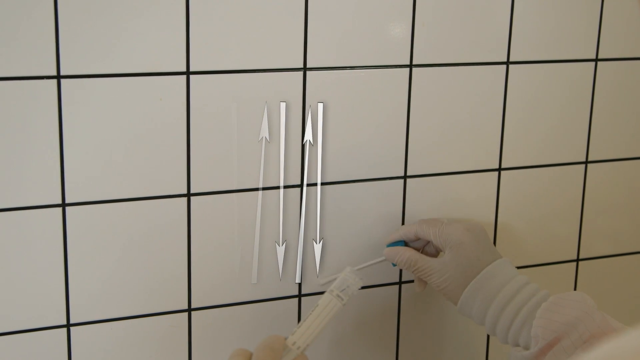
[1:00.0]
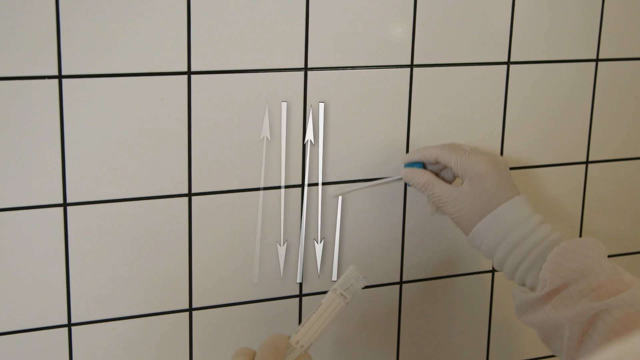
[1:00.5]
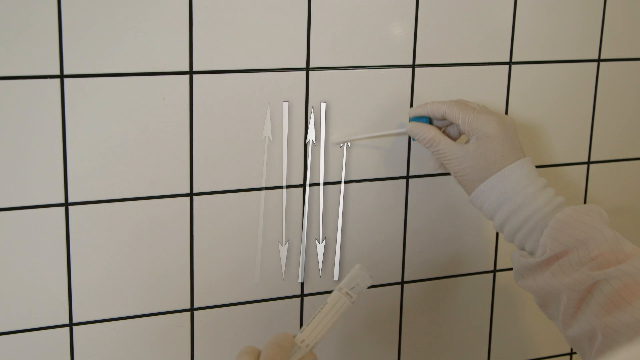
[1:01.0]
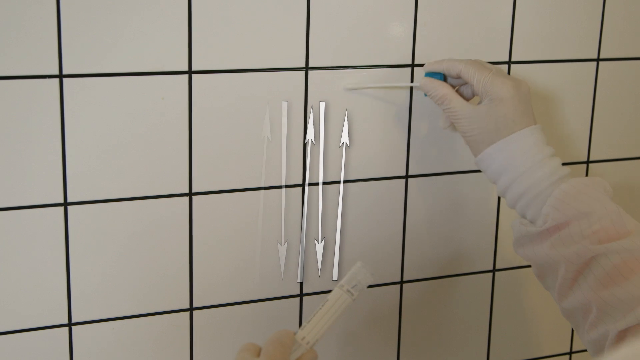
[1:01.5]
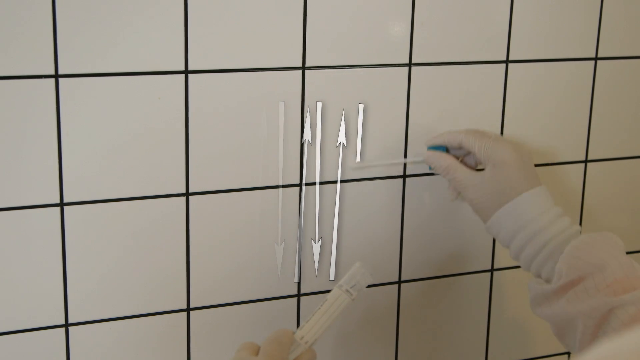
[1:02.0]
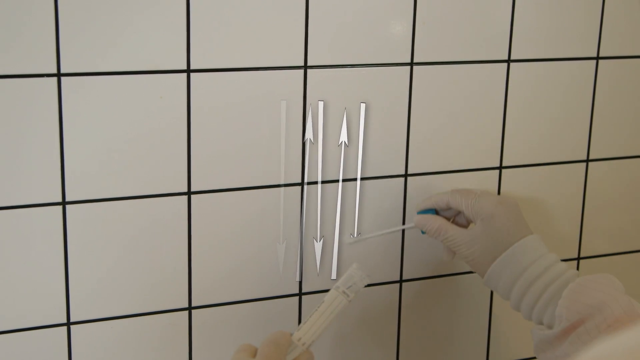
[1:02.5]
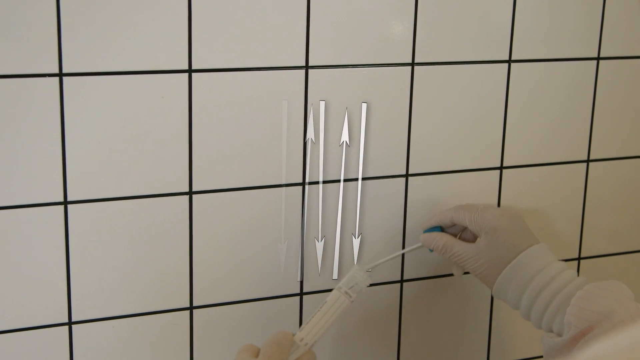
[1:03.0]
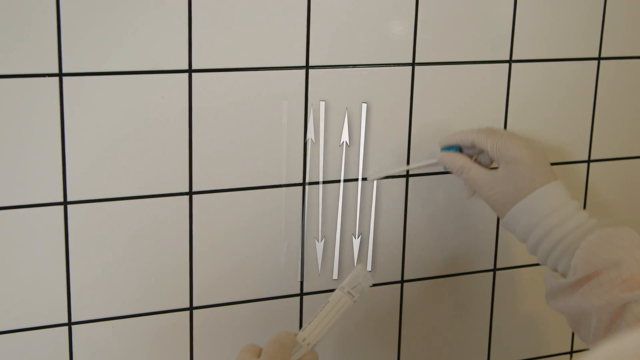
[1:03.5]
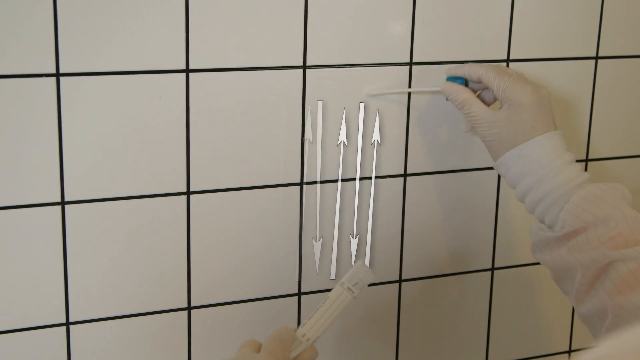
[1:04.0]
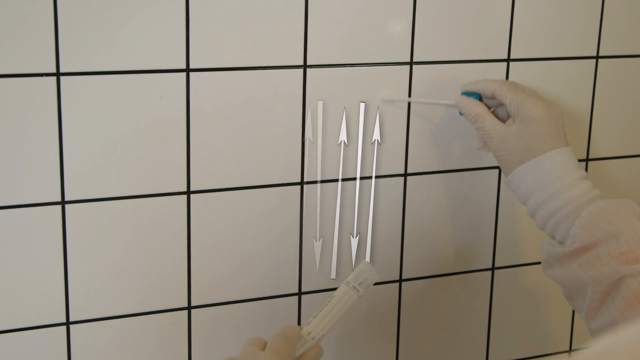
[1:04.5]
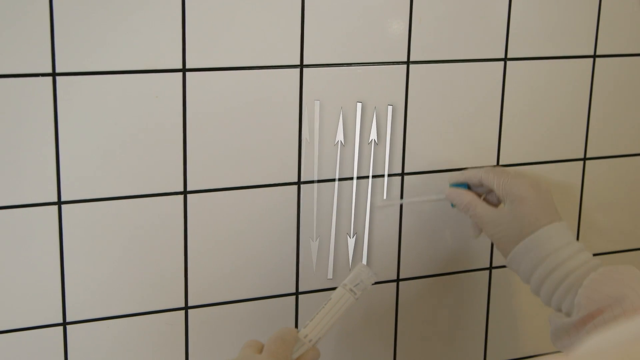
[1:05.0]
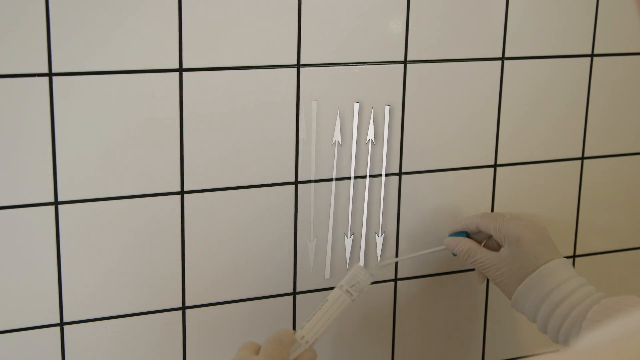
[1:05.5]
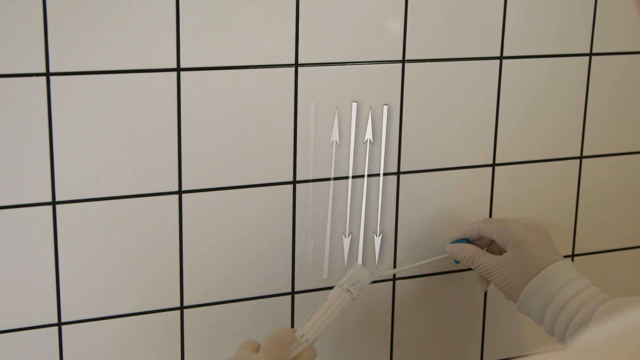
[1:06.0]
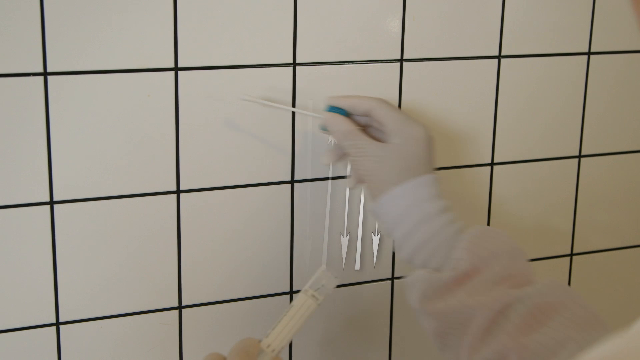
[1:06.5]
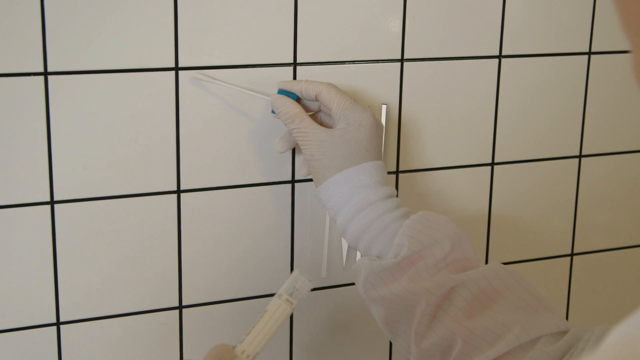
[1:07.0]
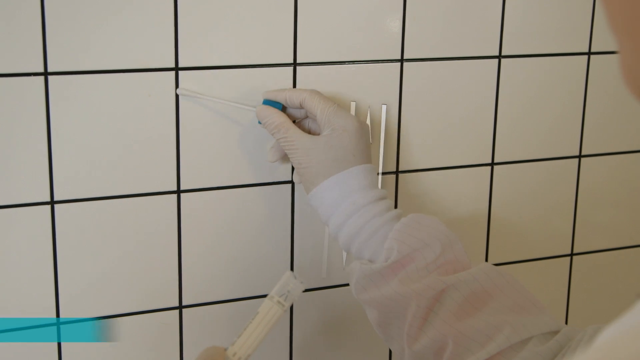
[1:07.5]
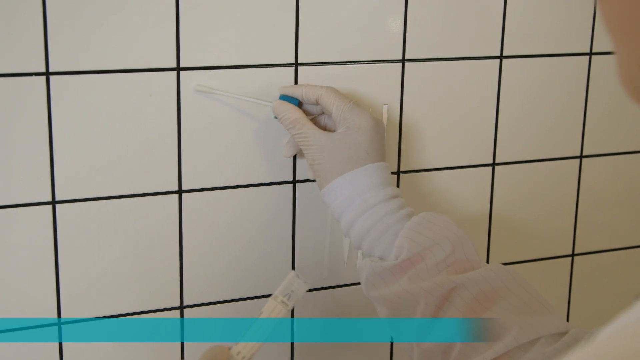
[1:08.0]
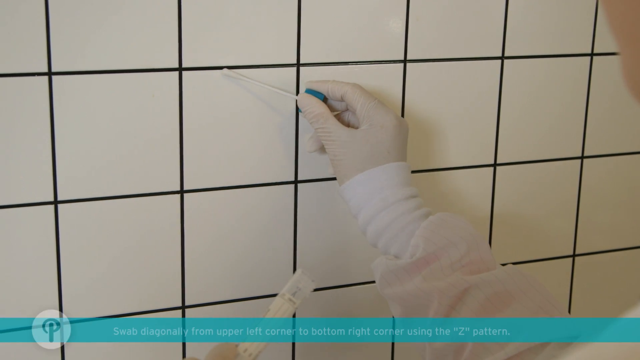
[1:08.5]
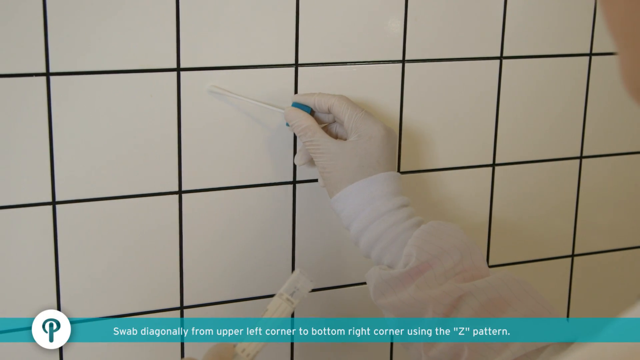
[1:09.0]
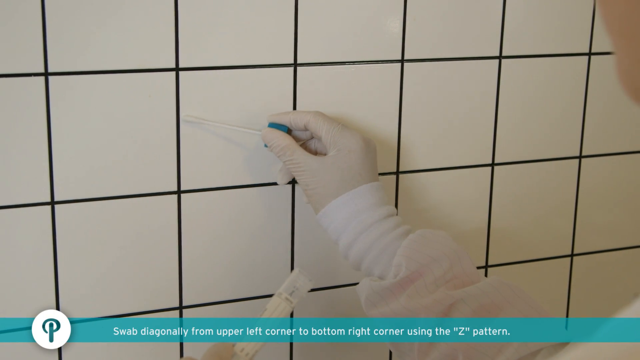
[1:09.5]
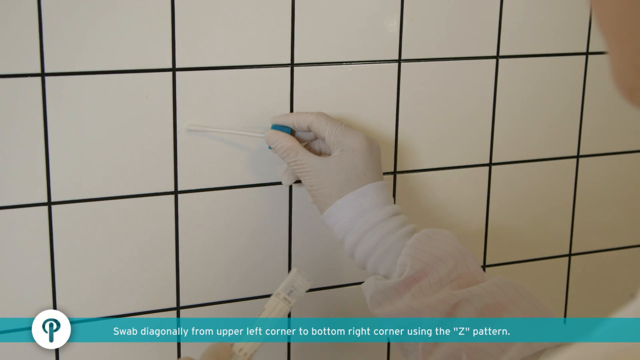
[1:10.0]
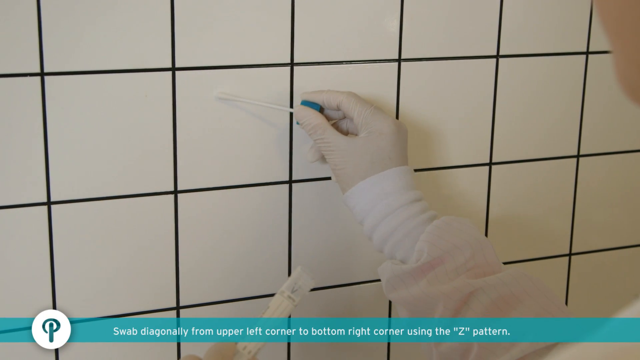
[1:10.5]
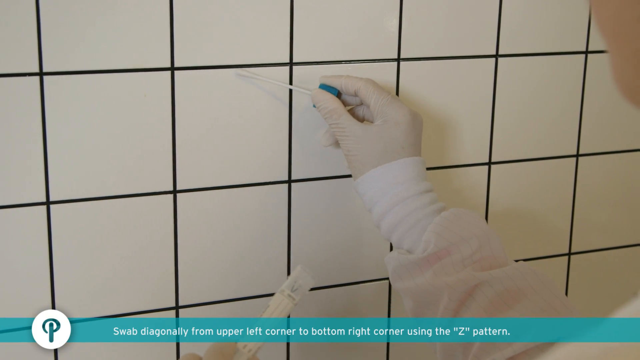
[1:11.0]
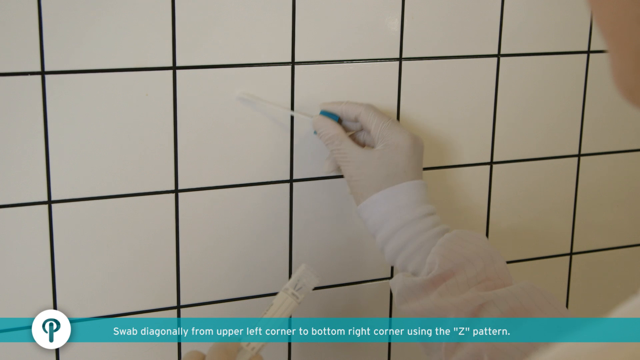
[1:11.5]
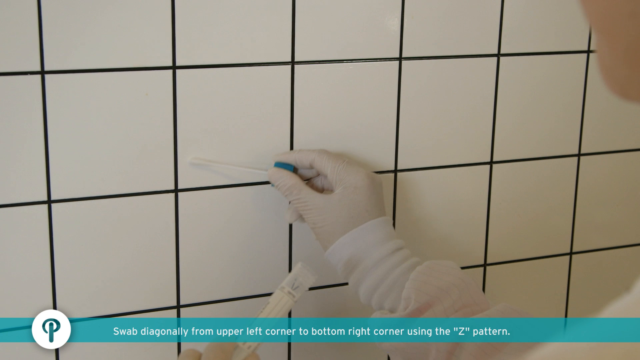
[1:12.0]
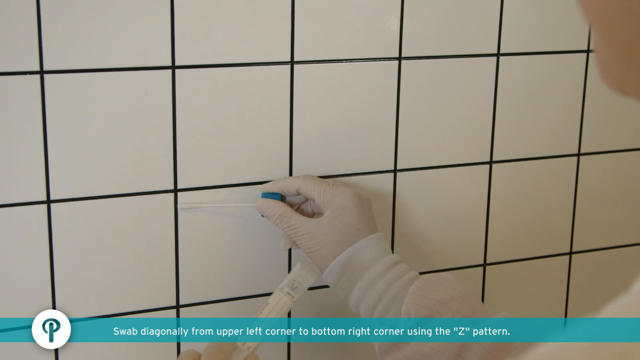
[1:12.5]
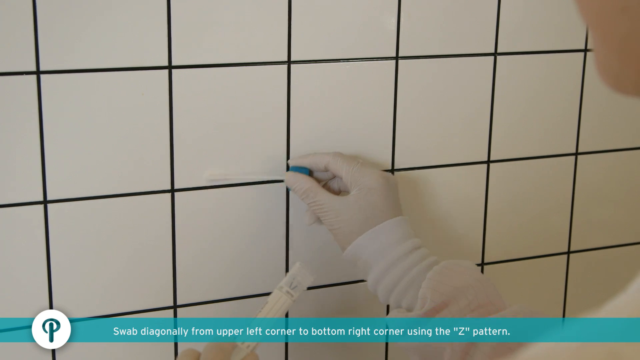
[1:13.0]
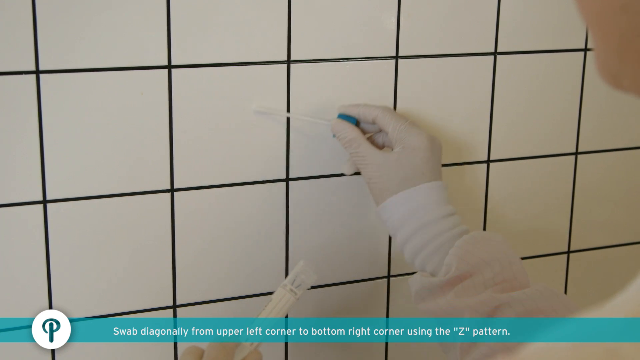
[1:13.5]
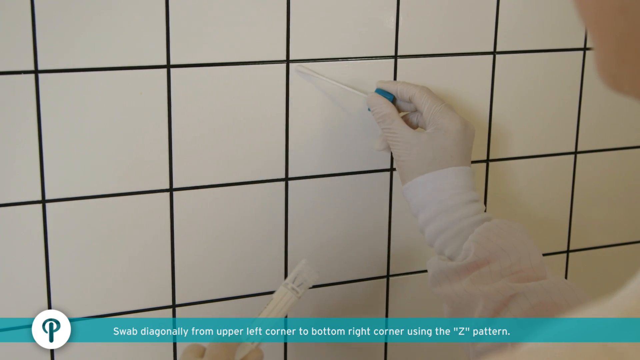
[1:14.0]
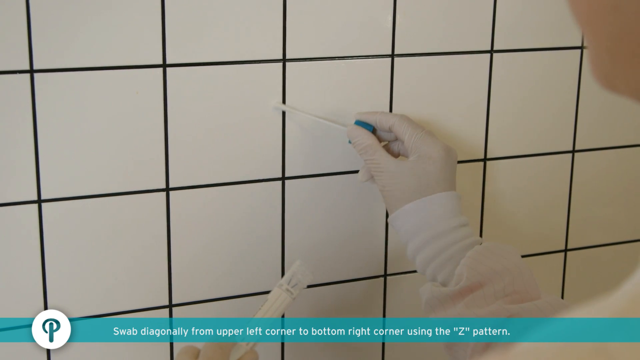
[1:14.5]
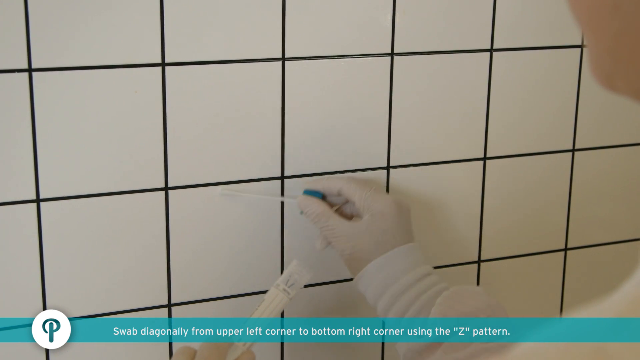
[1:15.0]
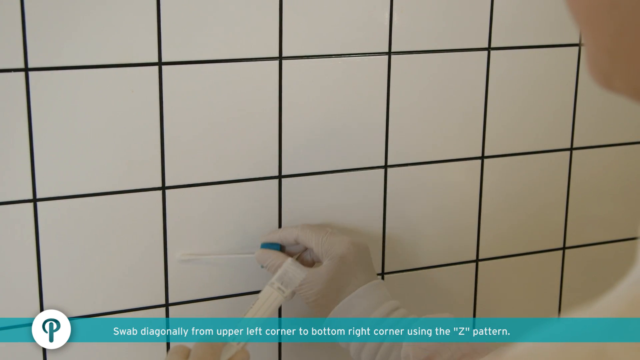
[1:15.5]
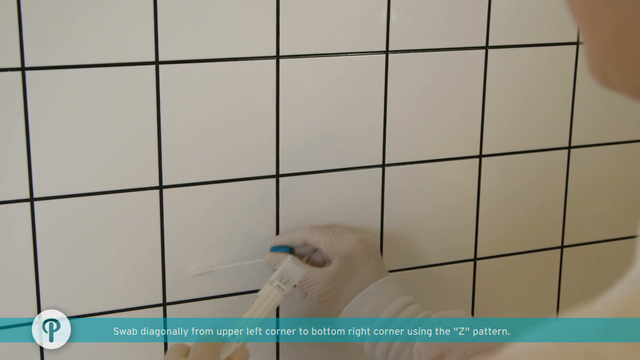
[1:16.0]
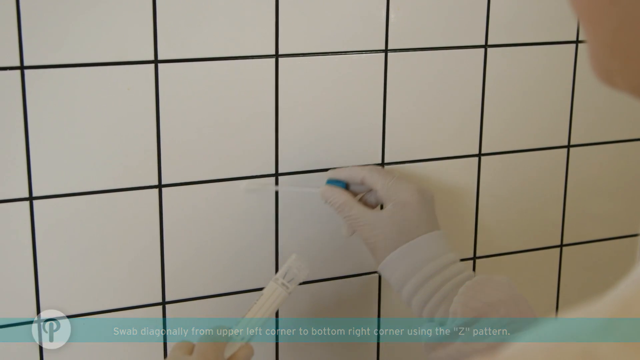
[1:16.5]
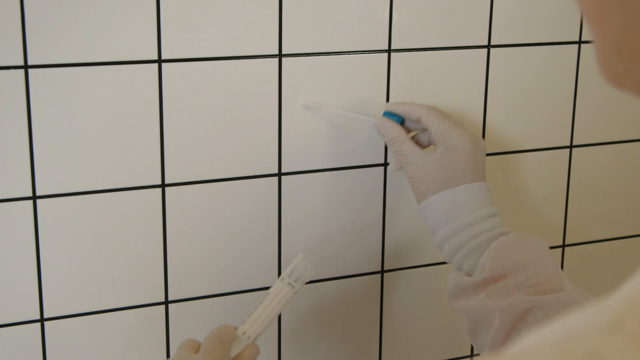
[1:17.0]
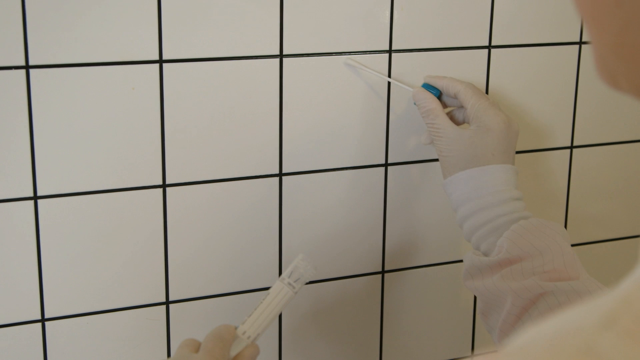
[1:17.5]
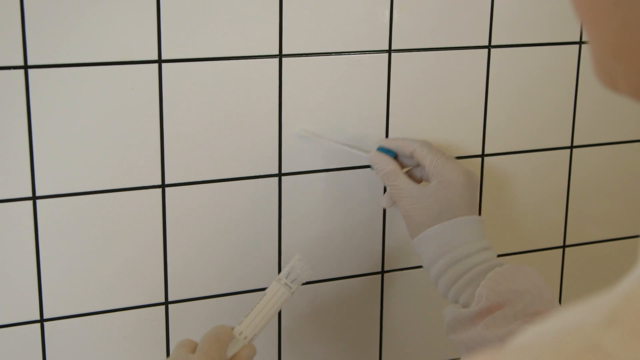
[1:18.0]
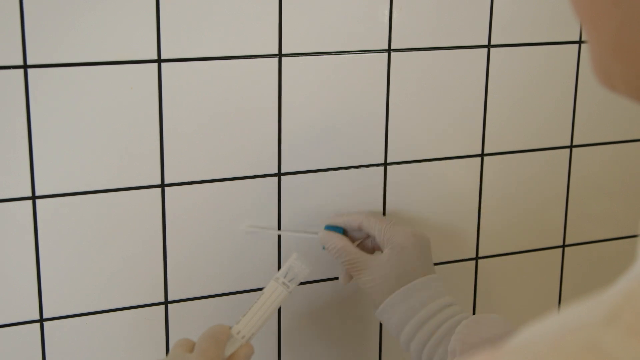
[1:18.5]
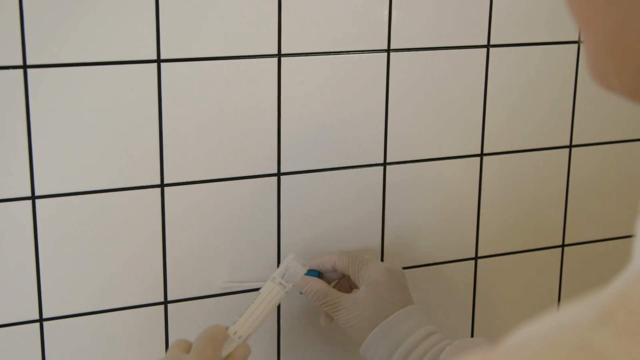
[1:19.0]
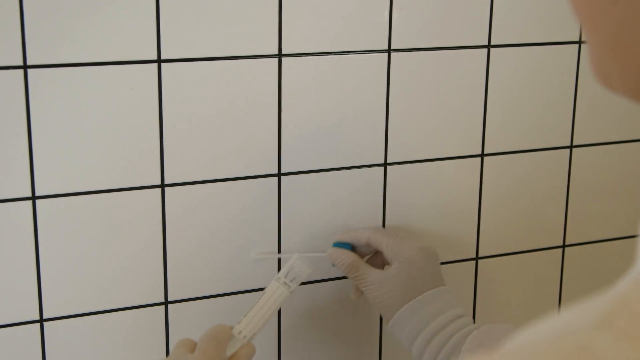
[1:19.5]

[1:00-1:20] The woman in the lab coat, with extended cuffs or sleeves covering her wrists, wears gloves. She is still swabbing up and down, with arrows on the screen showing the up-and-down motion, and then she swabs diagonally within one square of the white tile, which has dark gray between the tiles. Her face is not shown. The q-tip-like swab, attached to the lid, has not yet been put back in the test tube. Pop-up text appears showing the swab going diagonally from the upper left corner to the bottom right corner, with a small instruction at the bottom of the screen.